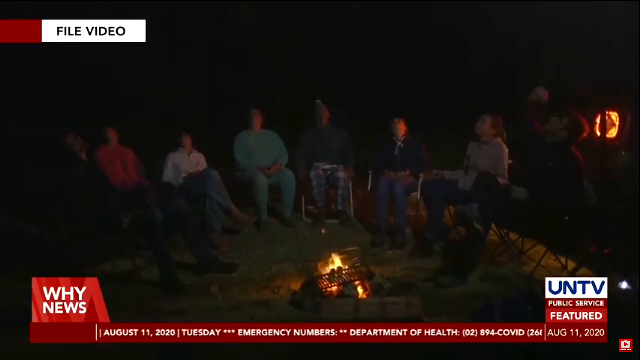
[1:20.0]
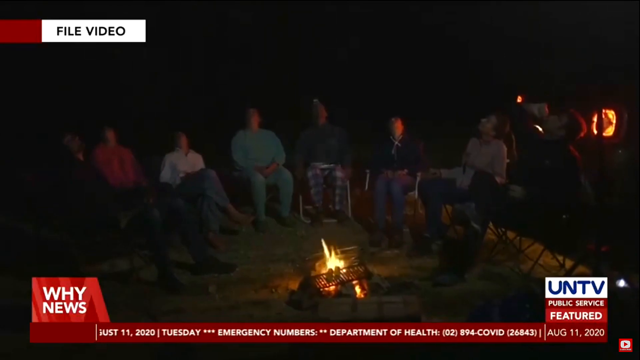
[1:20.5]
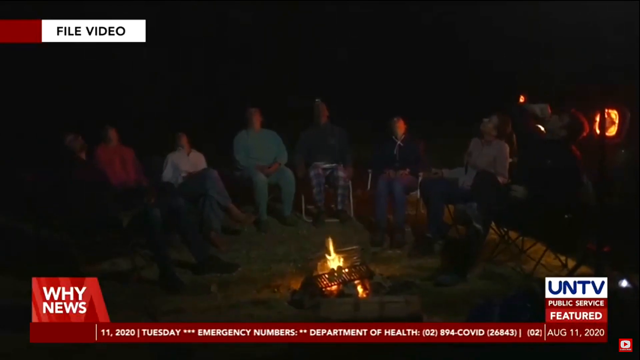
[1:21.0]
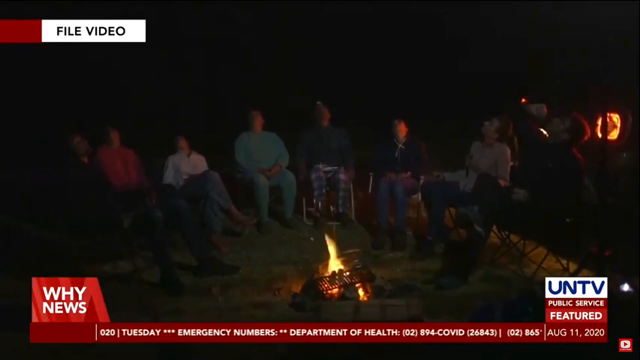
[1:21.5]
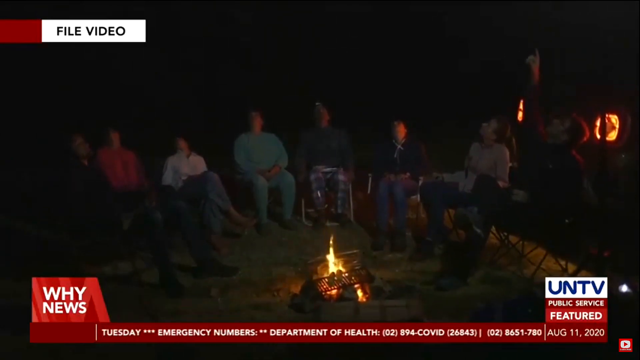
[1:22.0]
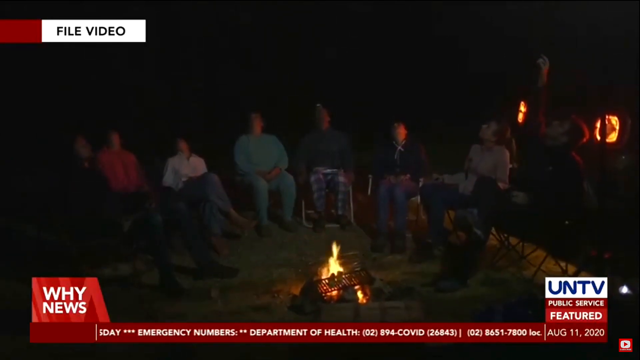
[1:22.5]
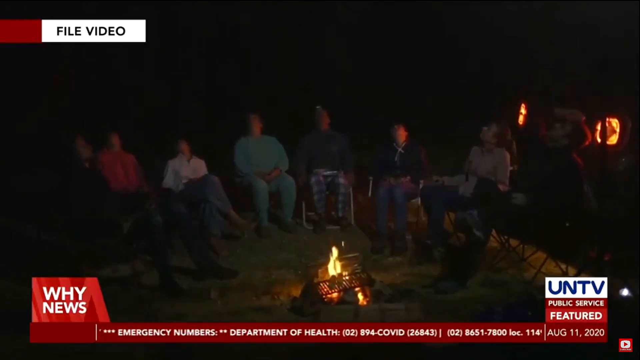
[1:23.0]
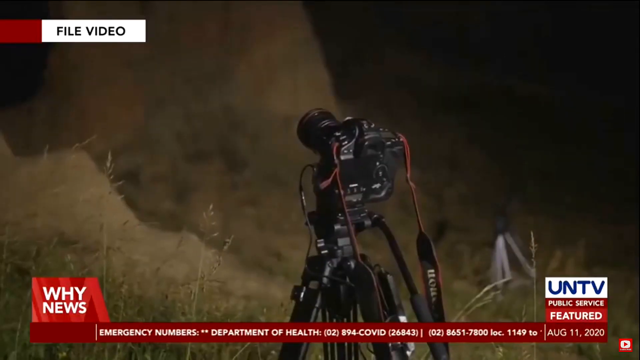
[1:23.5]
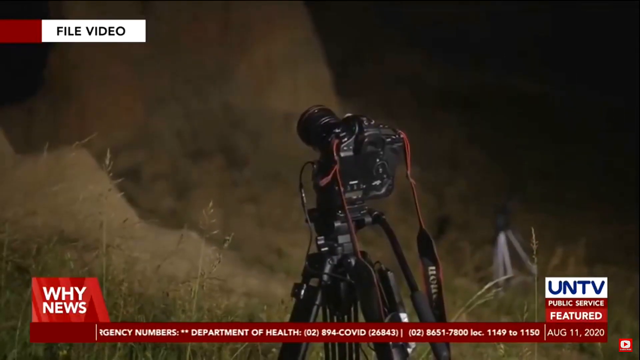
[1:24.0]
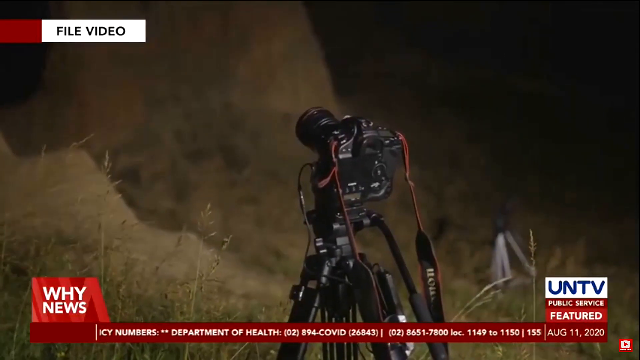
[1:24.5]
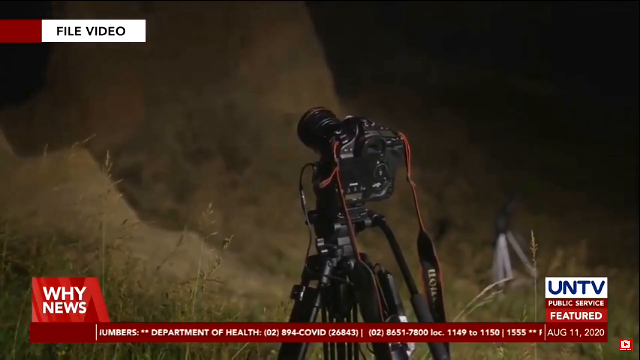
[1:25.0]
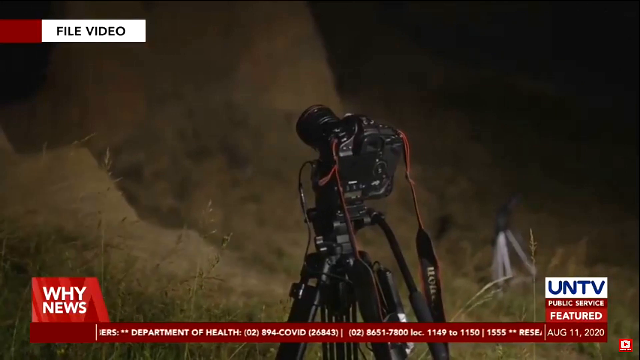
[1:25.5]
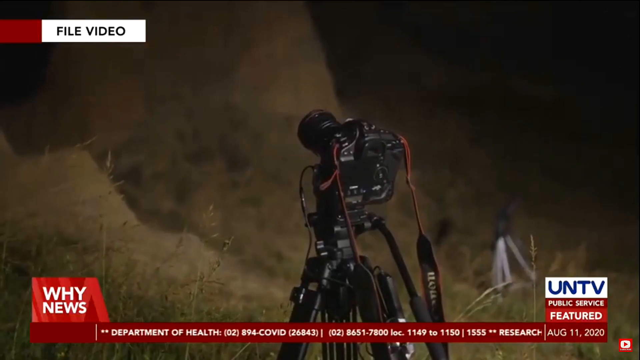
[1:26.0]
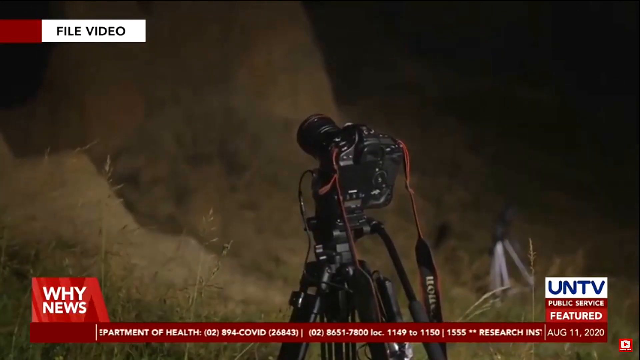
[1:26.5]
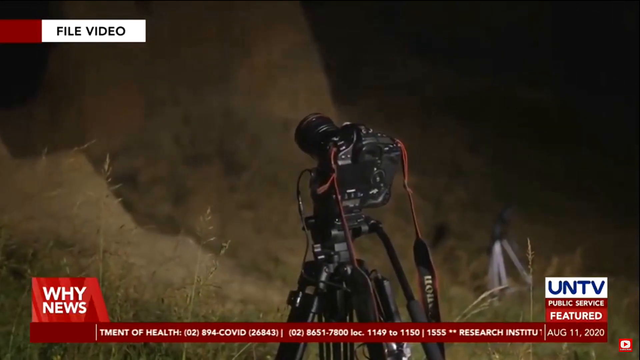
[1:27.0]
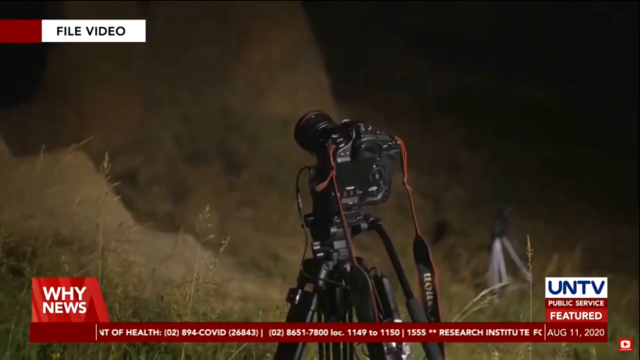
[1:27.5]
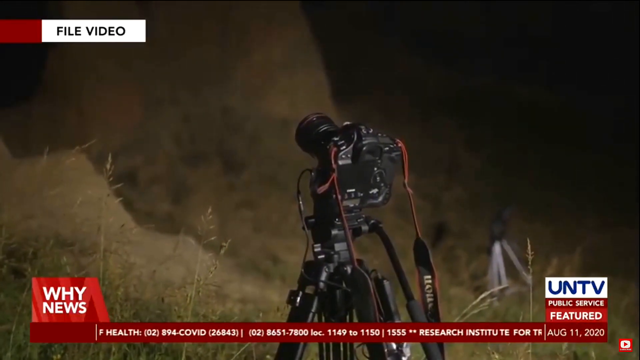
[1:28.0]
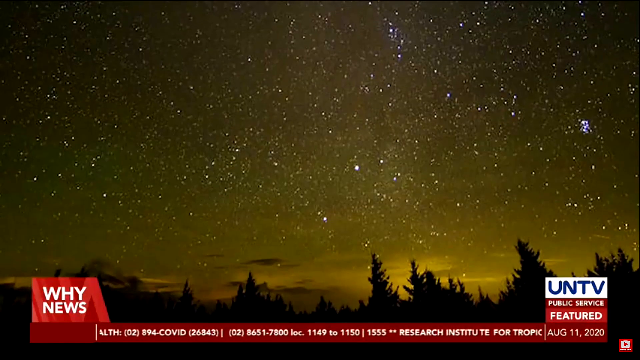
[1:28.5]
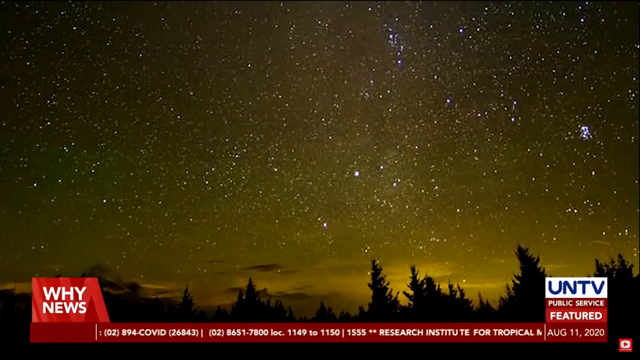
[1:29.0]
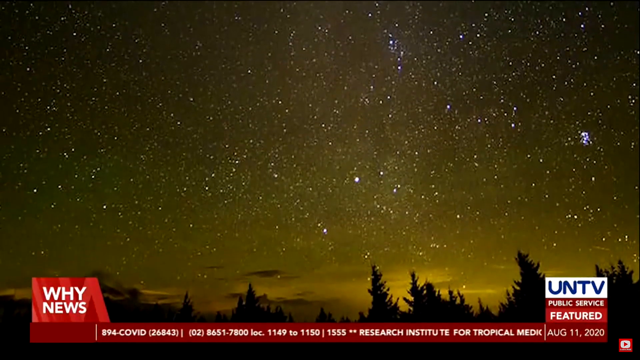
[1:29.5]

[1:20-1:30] The people are still sitting outside by the fire they made, chatting. A camera appears, seemingly set up to take pictures or videos when the meteor shower appears.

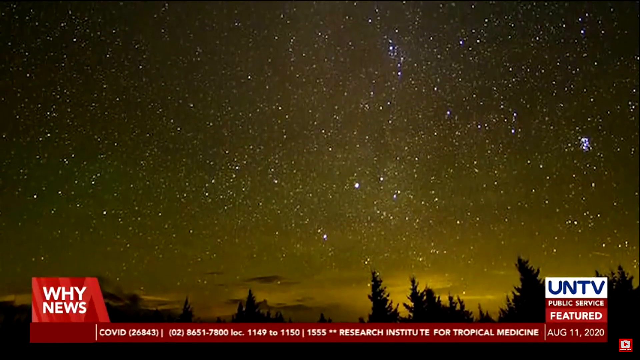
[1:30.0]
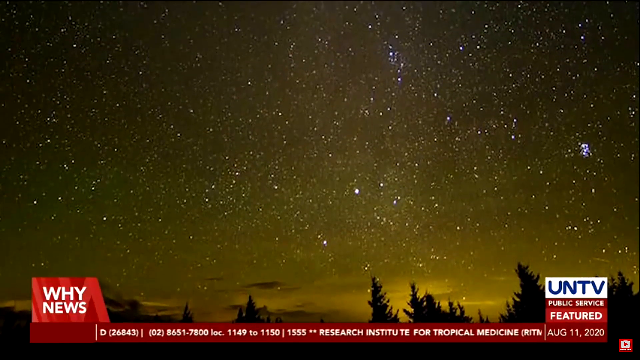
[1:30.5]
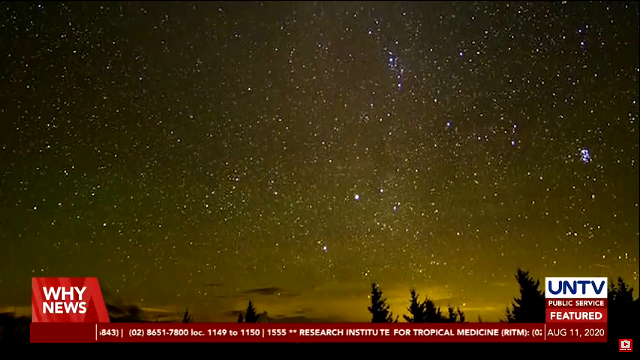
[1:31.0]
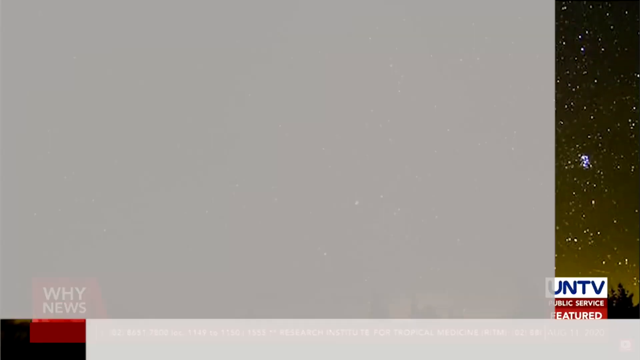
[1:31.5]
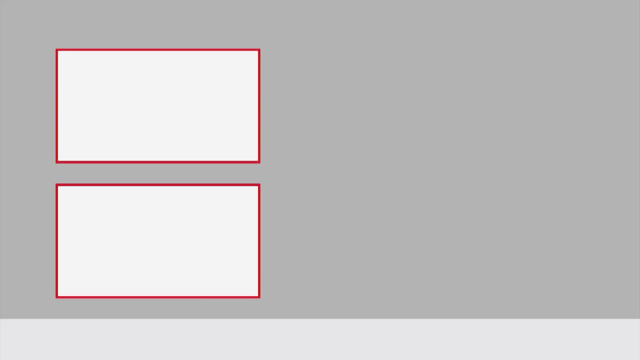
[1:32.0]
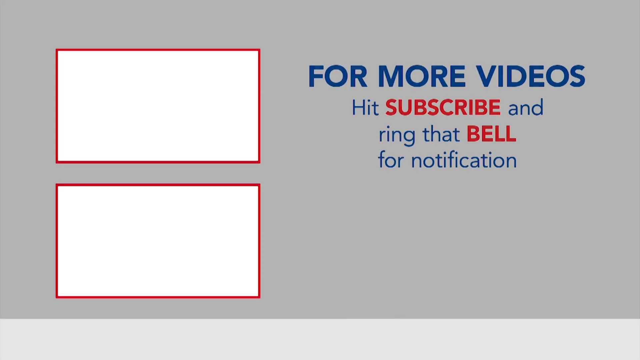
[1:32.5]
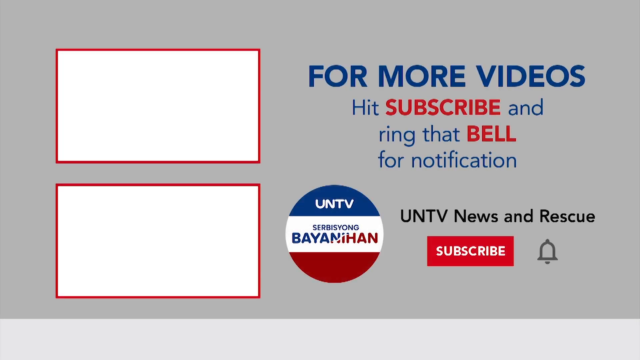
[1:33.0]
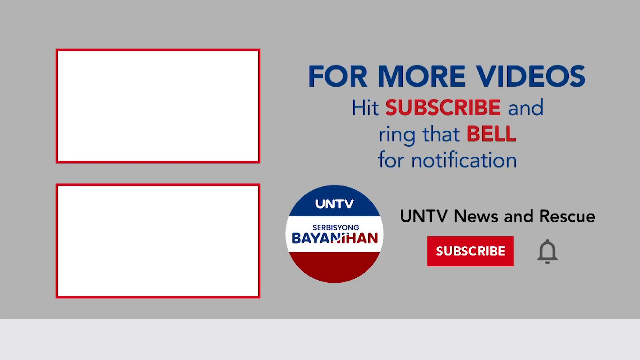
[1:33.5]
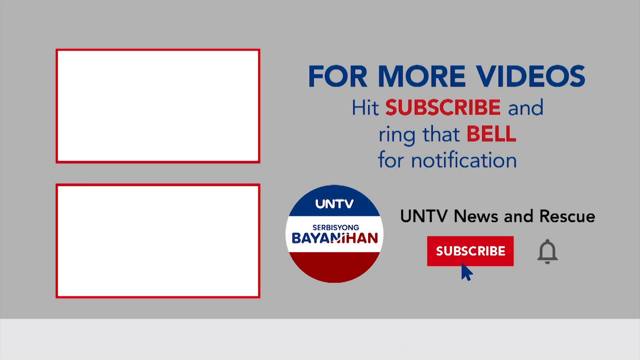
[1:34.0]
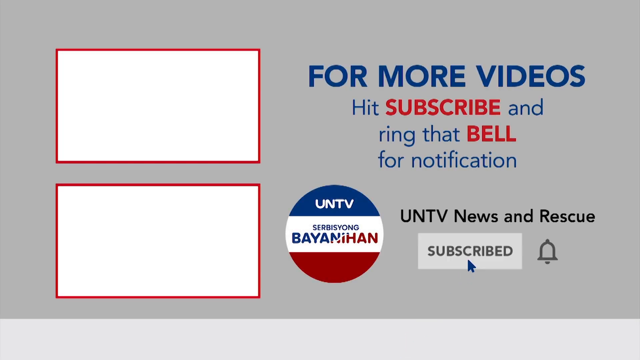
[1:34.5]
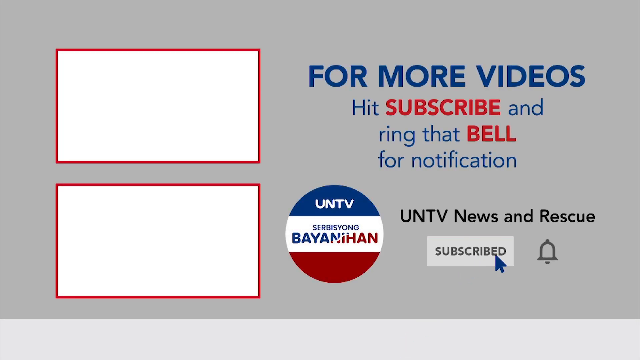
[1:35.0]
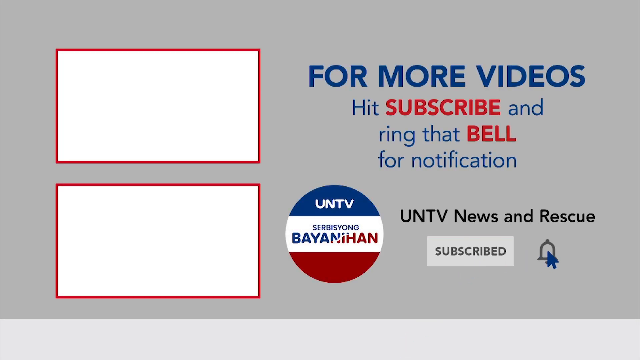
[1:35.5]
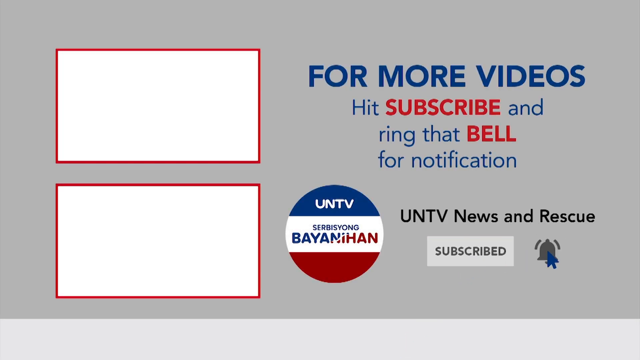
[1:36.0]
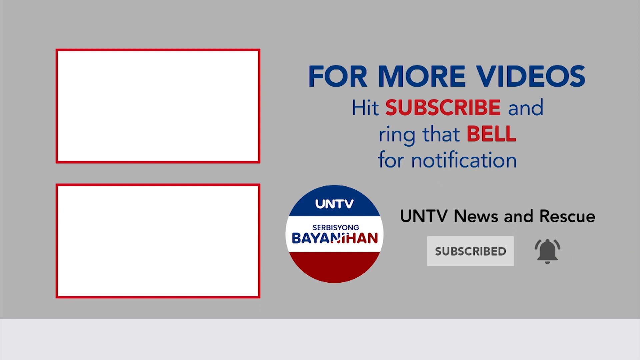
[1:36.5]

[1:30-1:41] As the meteor shower appears, the sky changes: it fills with something like glittering stars, and its color becomes yellowish. People photograph the scene. The video then cuts to information displayed in blue and red that reads "for more videos hit subscribe and ring that bell for notification," showing where to subscribe and how to ring the notification bell. The video is presented by UNTV News.